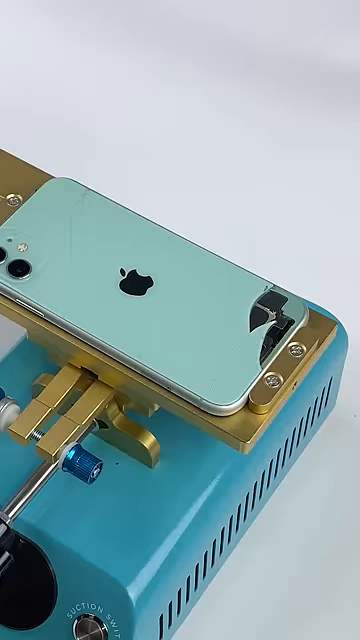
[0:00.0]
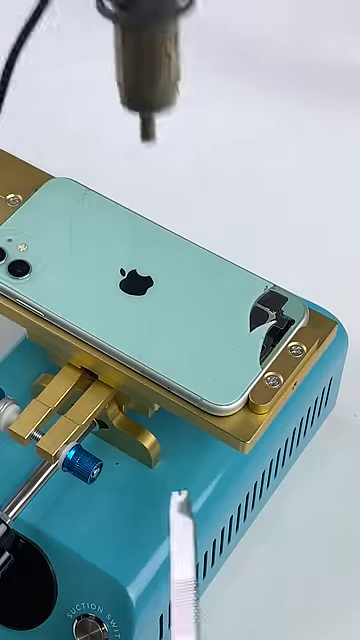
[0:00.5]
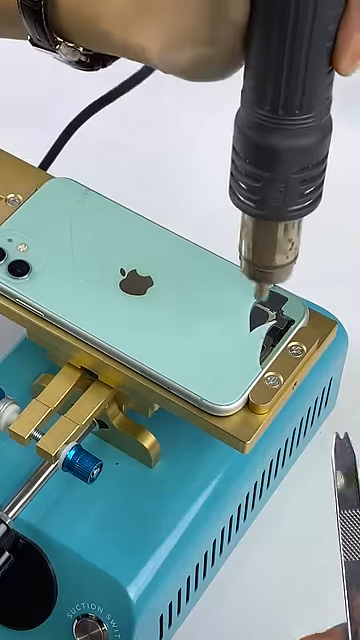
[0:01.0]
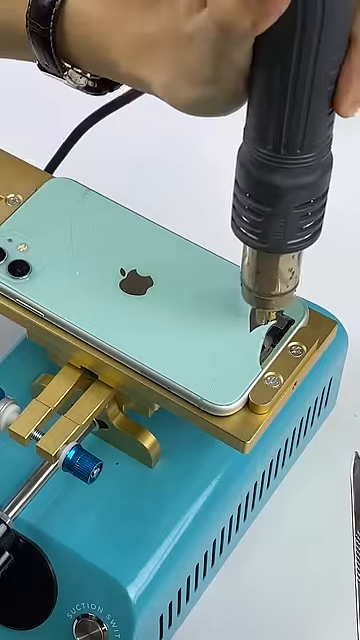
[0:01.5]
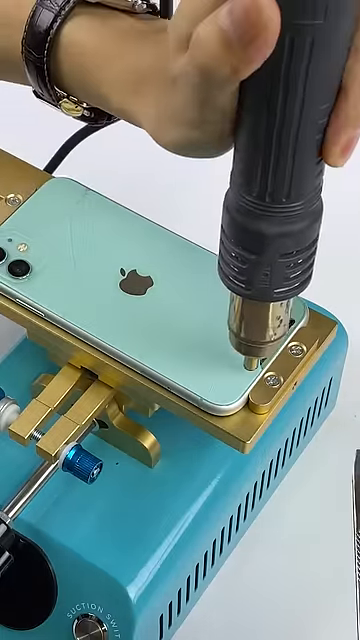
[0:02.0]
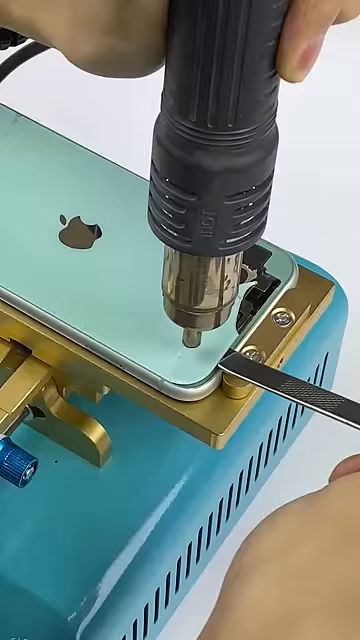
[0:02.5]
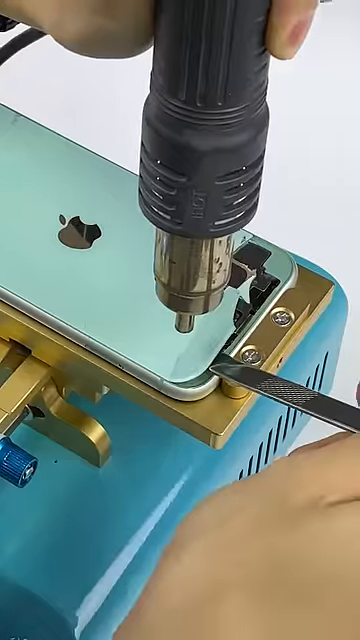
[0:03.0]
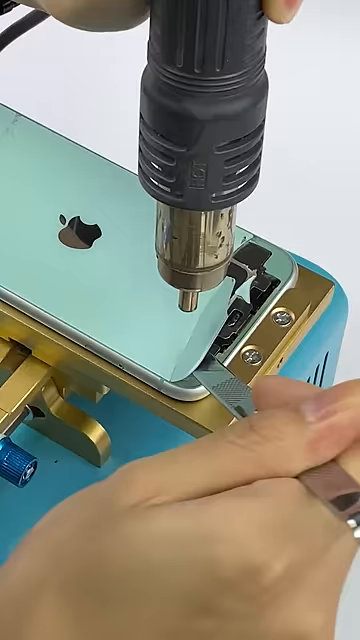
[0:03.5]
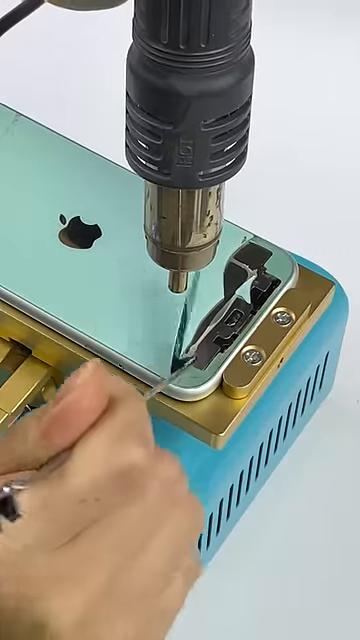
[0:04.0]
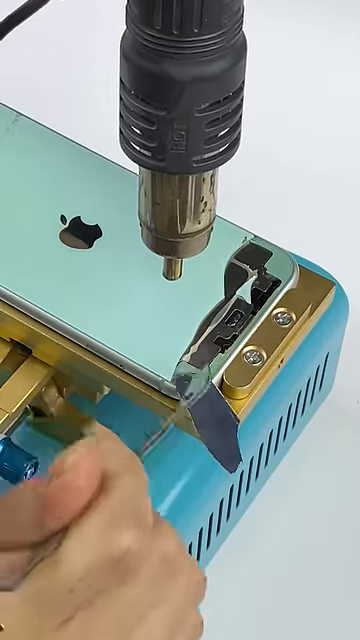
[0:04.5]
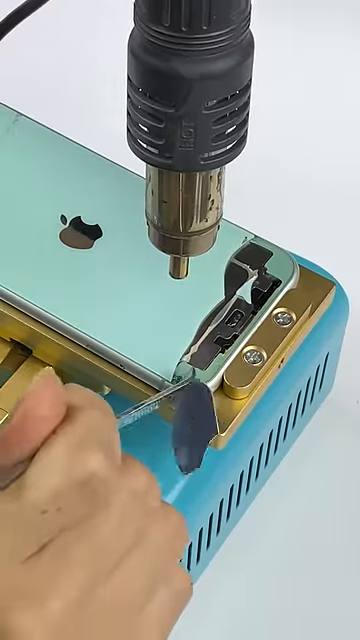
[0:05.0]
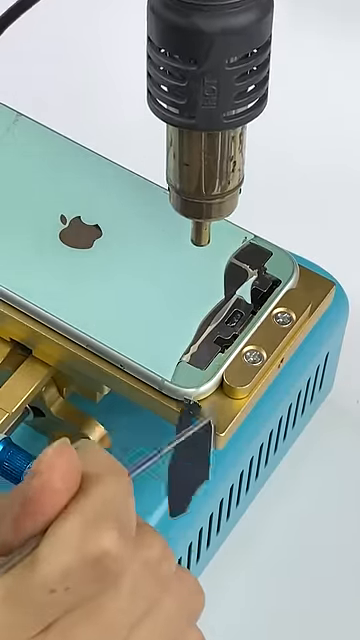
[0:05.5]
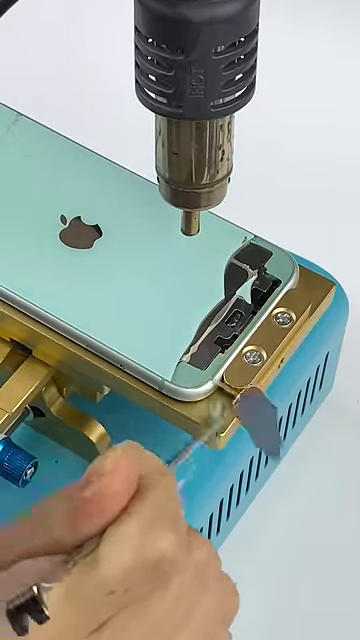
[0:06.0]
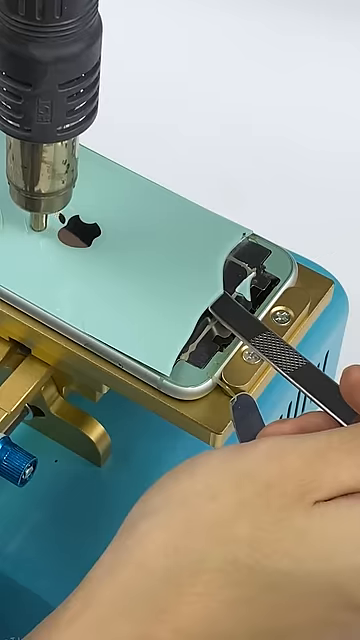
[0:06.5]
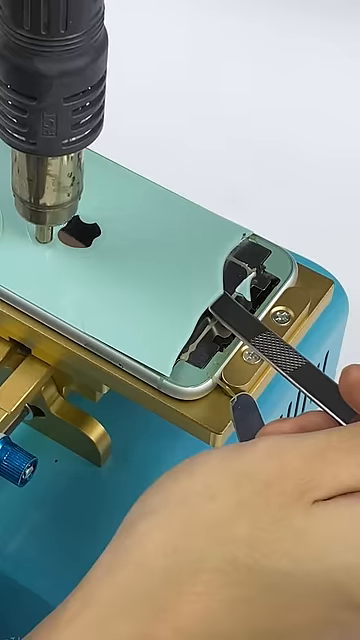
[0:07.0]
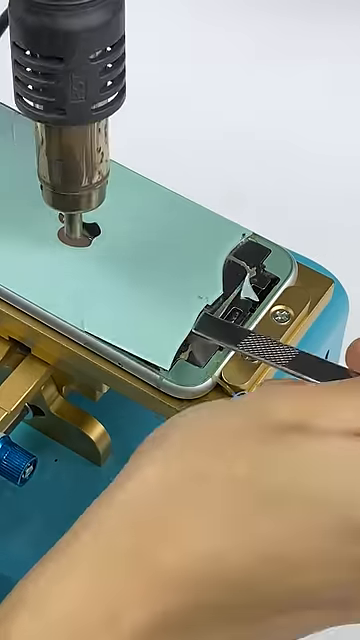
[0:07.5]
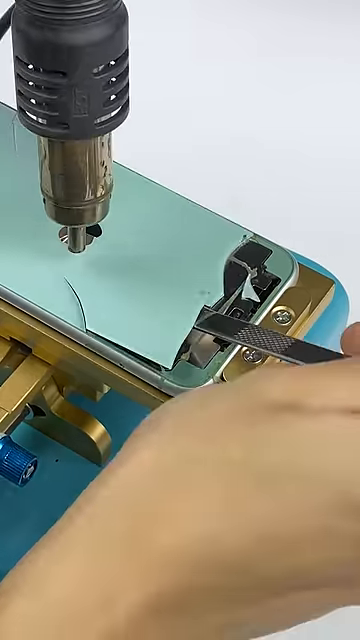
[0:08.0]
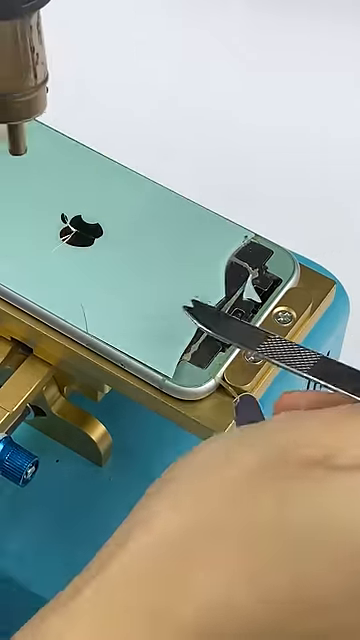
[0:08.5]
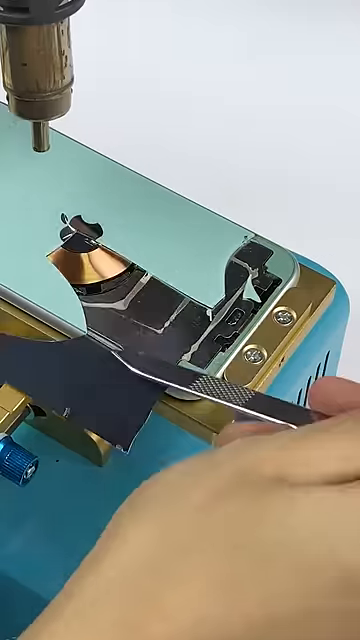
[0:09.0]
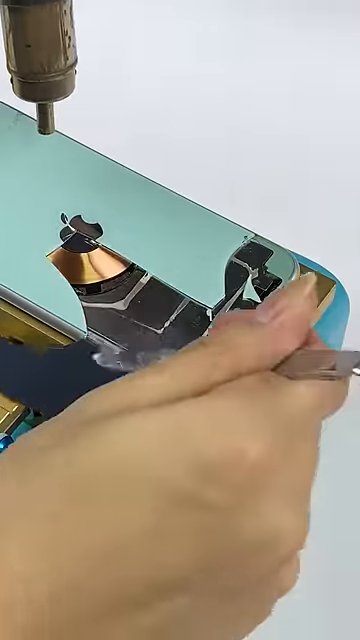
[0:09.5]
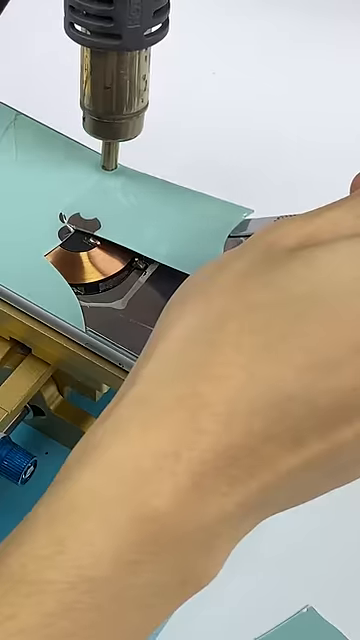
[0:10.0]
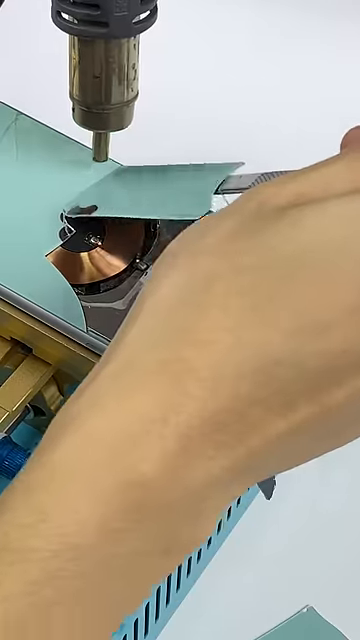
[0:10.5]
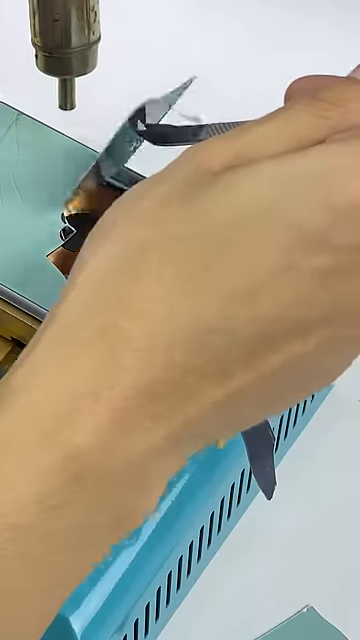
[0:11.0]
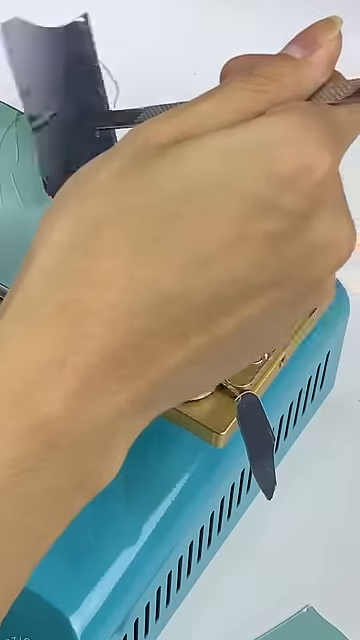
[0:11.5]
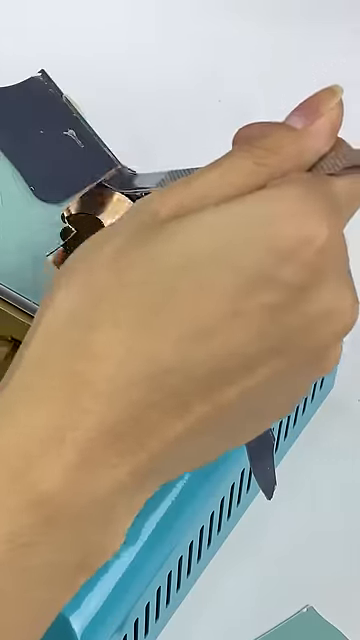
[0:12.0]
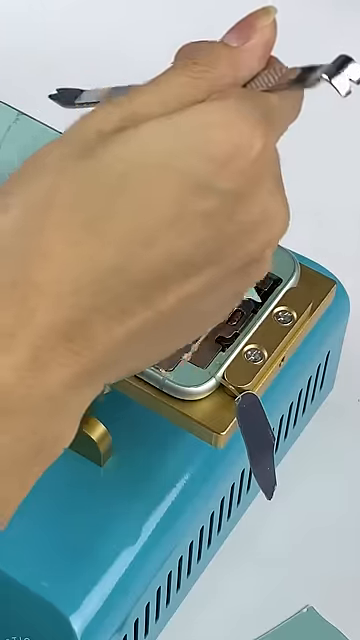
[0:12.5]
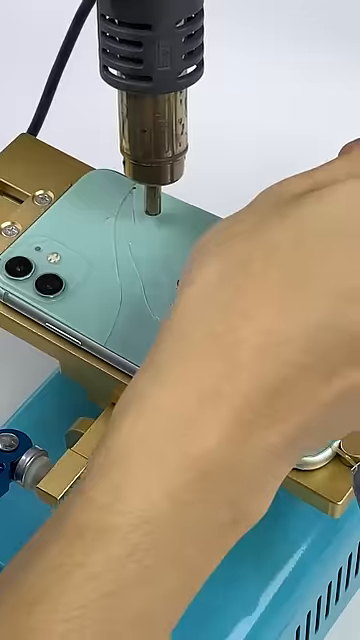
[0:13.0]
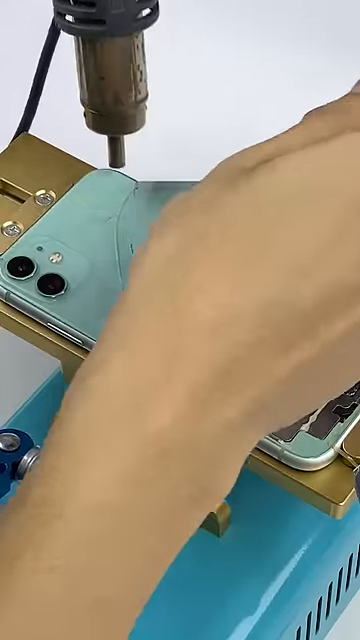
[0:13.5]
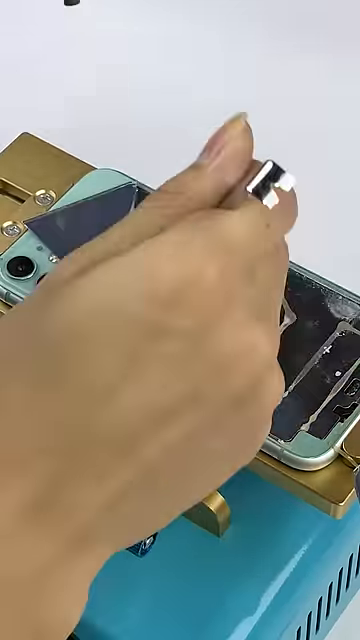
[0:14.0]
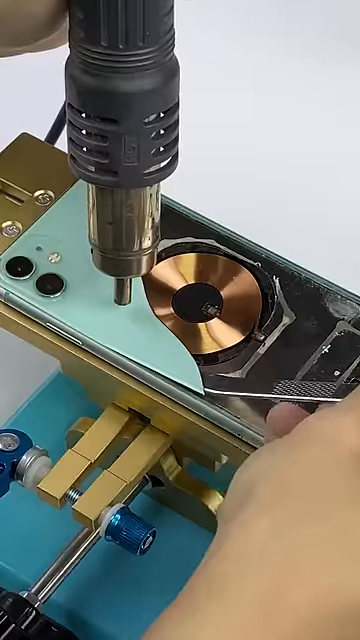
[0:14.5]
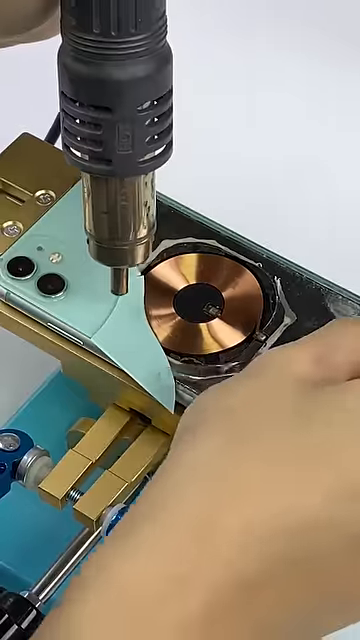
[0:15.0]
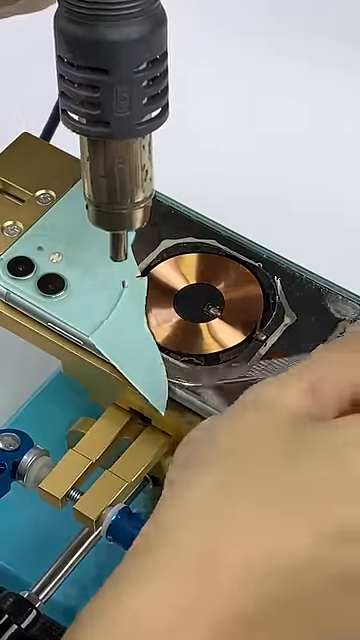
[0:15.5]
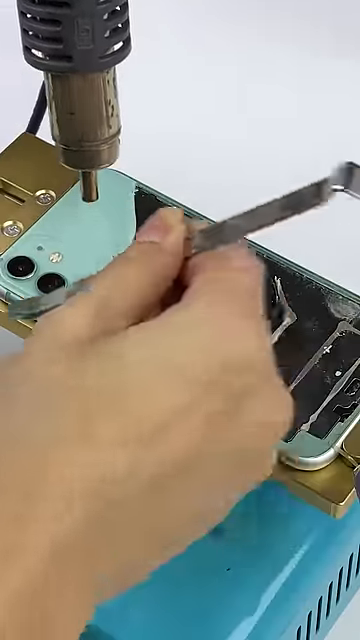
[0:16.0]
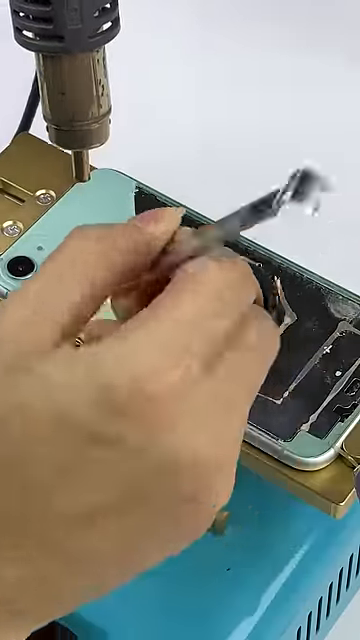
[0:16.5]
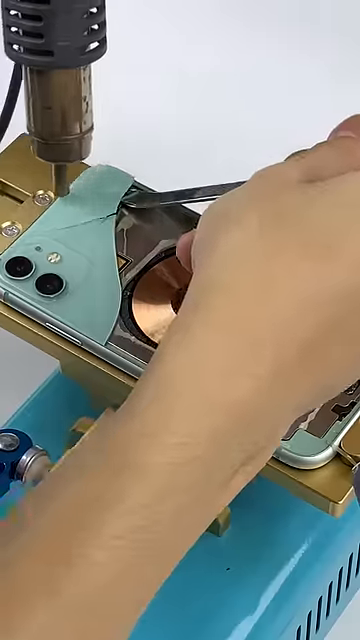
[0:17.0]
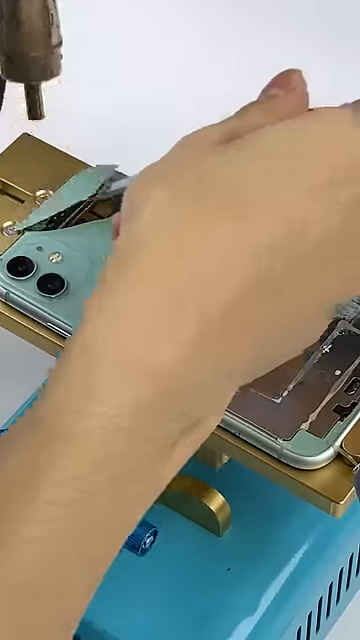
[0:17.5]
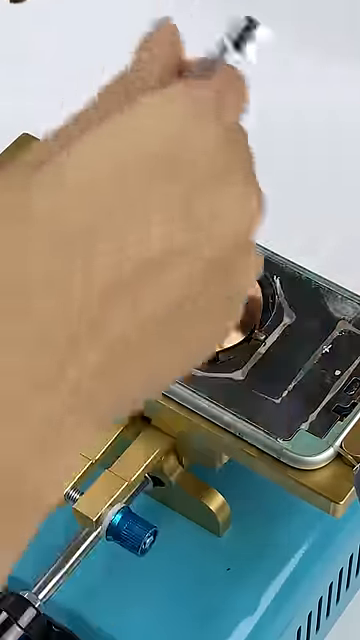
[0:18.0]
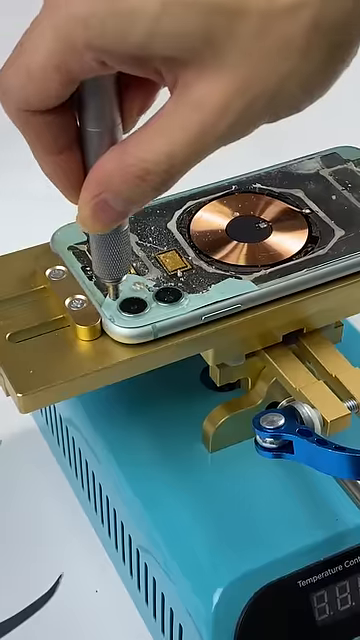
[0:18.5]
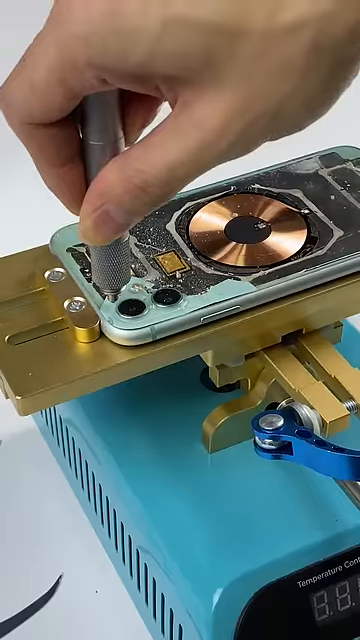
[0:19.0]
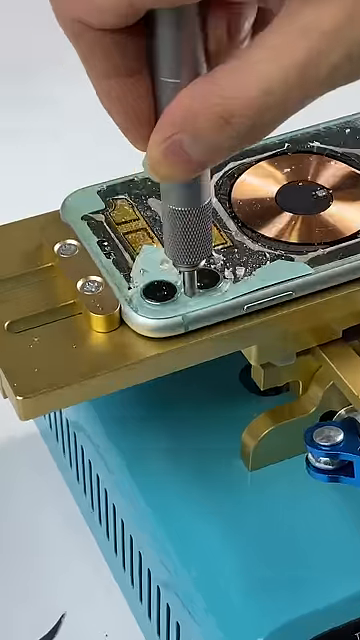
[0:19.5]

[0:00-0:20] Someone is working on the back glass panel of a light teal iPhone. In one hand they hold what appears to be a heating agent, used to loosen any bonding agents, and in the other hand a scalpel-looking item that they use to kind of pry and break the glass off the phone. The glass was apparently cracked. Working from right to left, they expose the back interworkings of the iPhone; inside, there is what looks like a small disc. They then use the tool to crack any remaining glass and remove it.